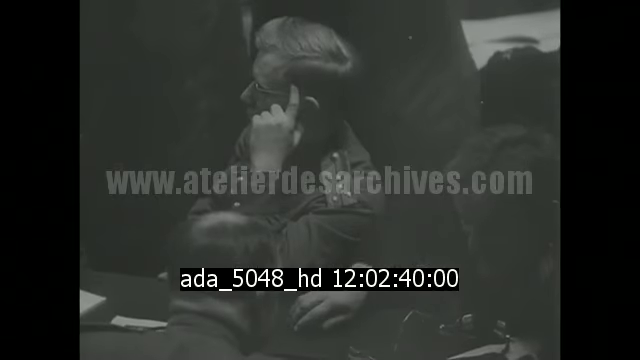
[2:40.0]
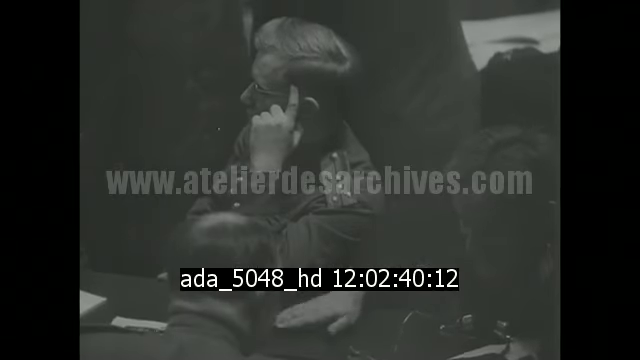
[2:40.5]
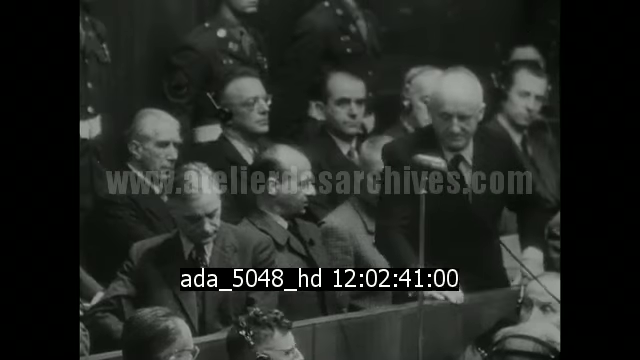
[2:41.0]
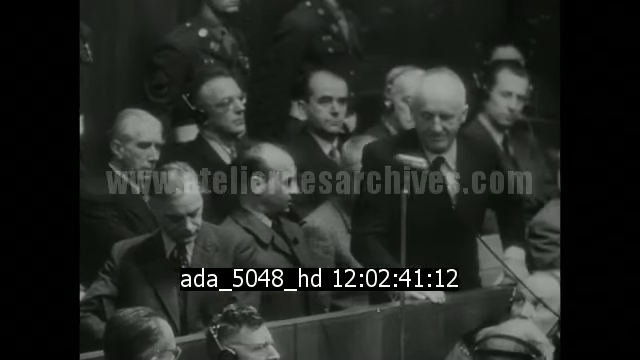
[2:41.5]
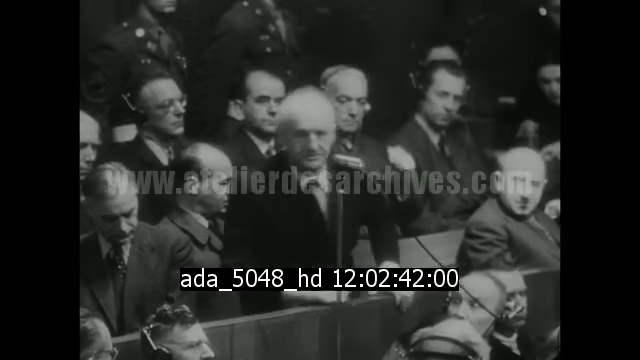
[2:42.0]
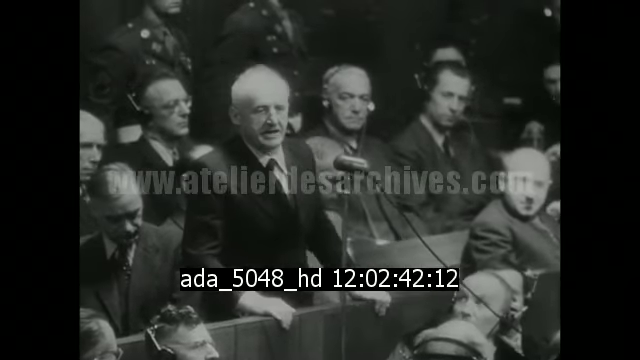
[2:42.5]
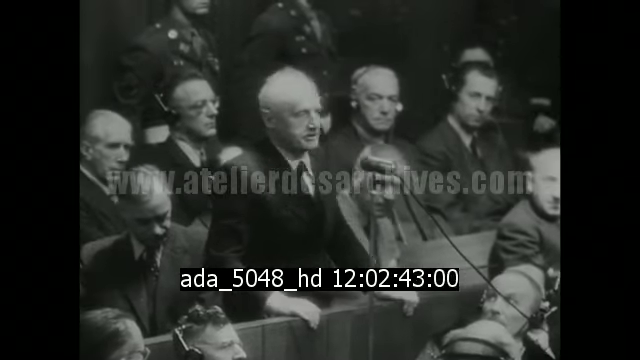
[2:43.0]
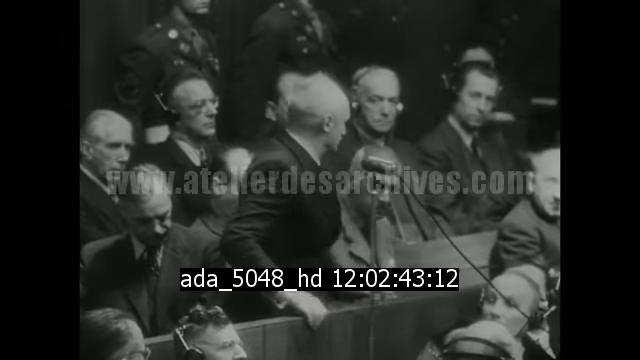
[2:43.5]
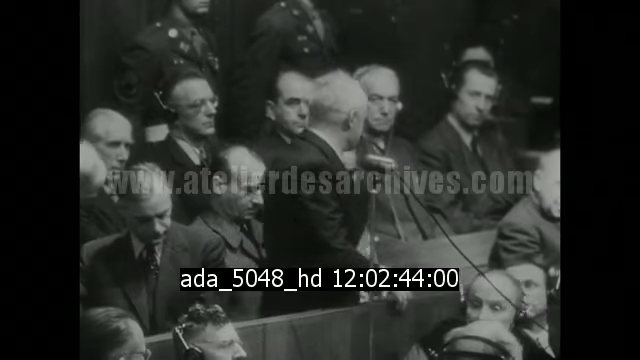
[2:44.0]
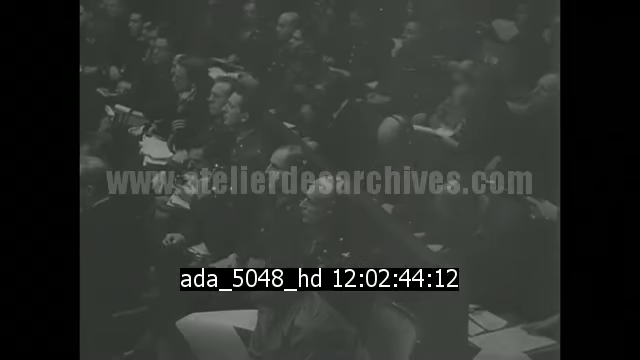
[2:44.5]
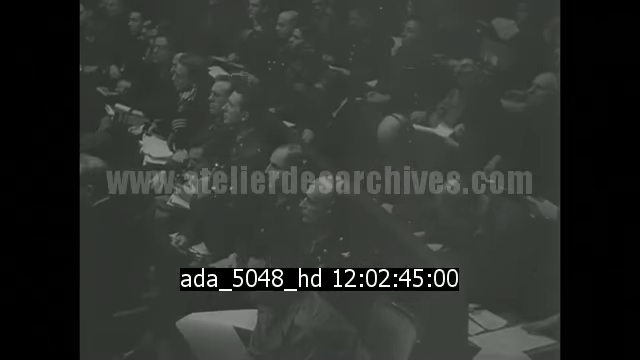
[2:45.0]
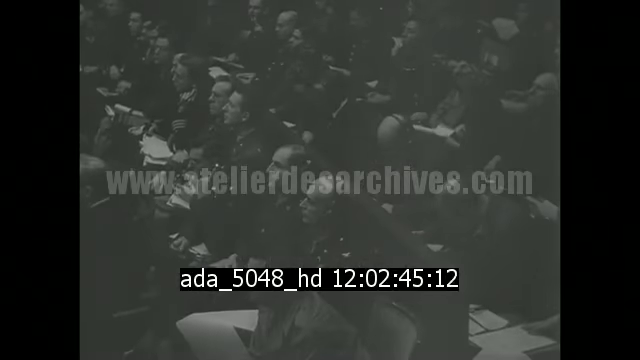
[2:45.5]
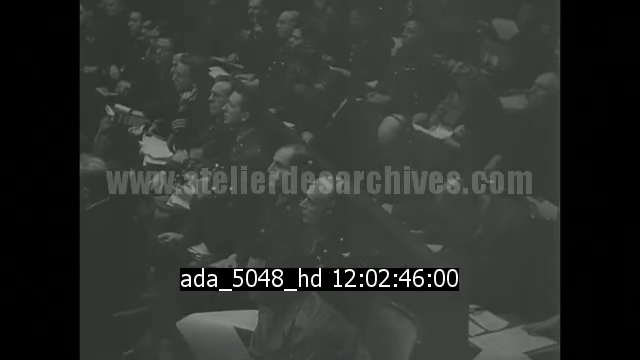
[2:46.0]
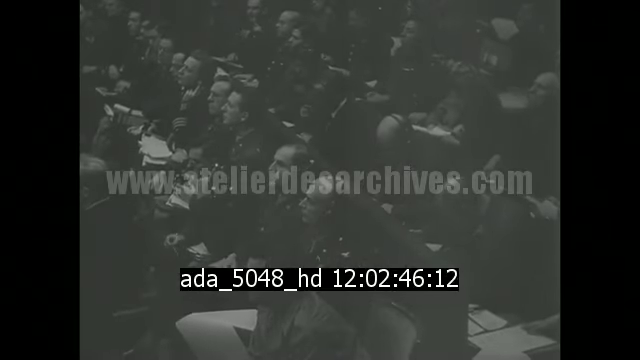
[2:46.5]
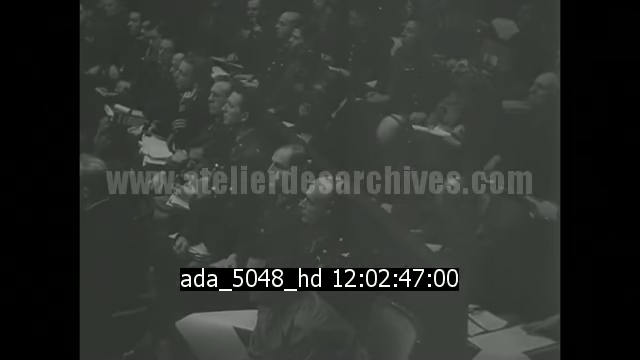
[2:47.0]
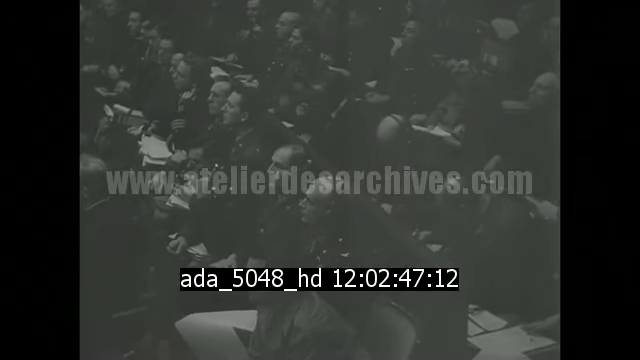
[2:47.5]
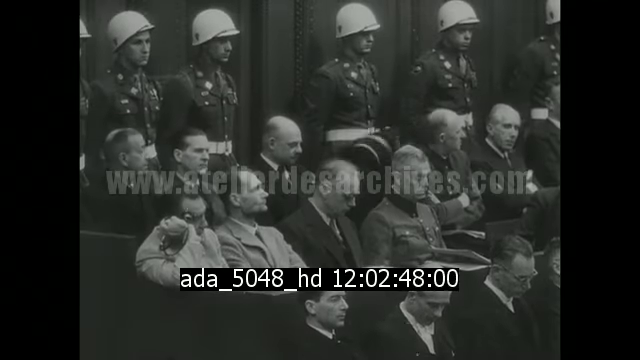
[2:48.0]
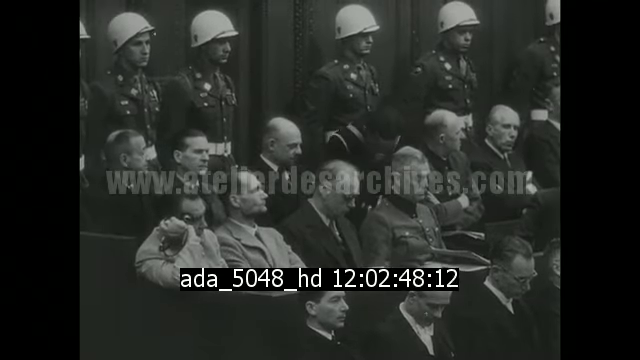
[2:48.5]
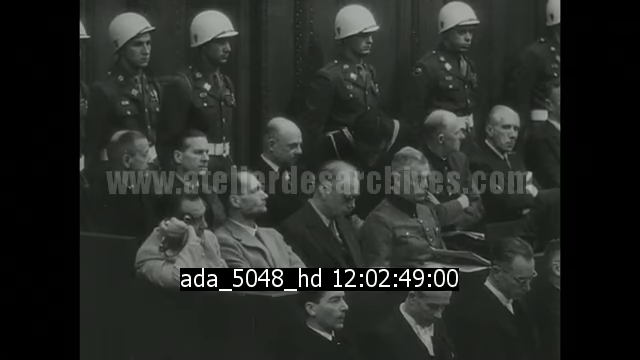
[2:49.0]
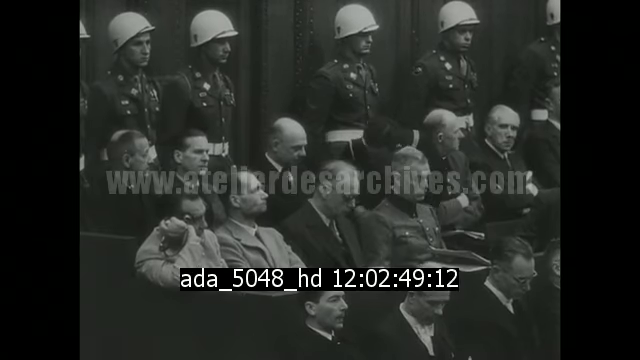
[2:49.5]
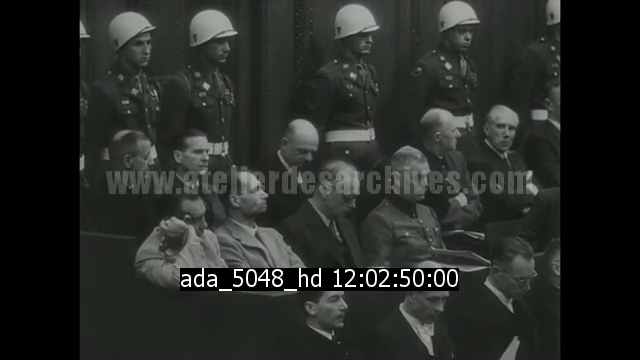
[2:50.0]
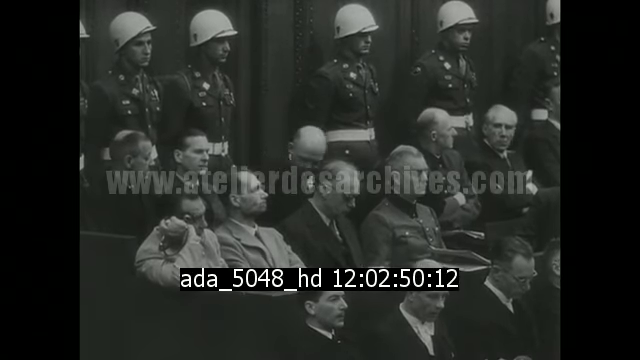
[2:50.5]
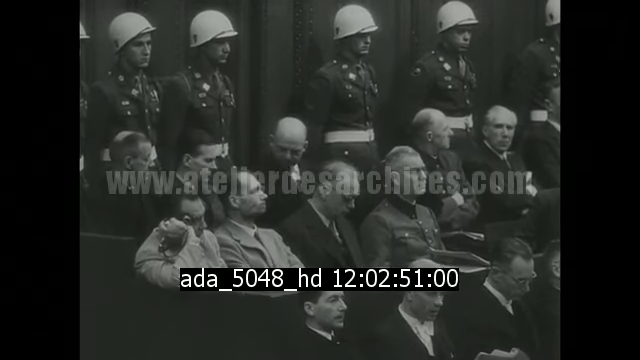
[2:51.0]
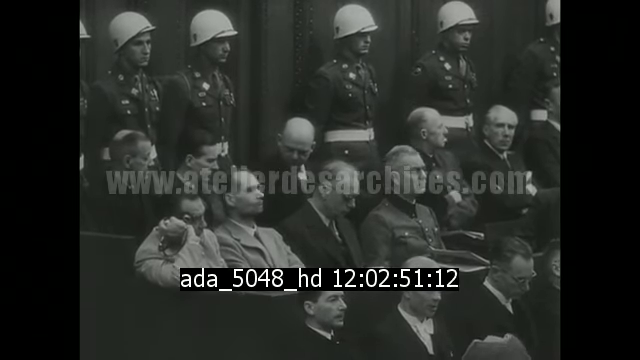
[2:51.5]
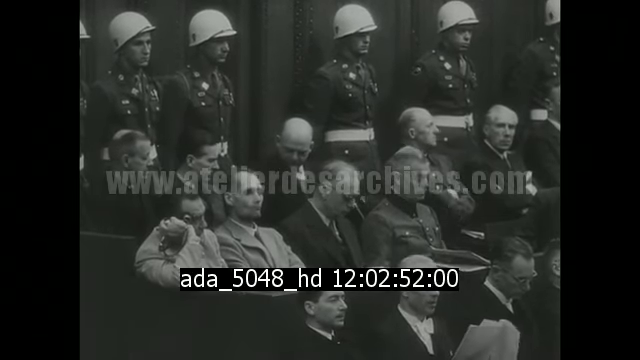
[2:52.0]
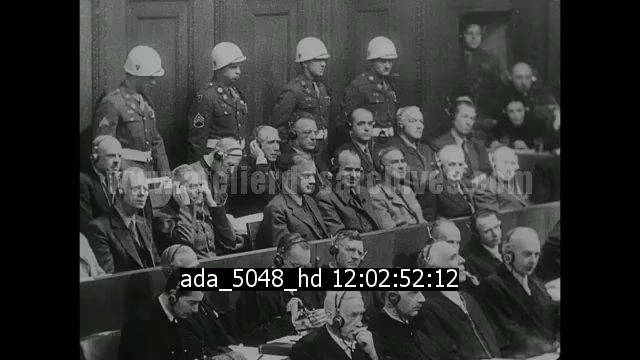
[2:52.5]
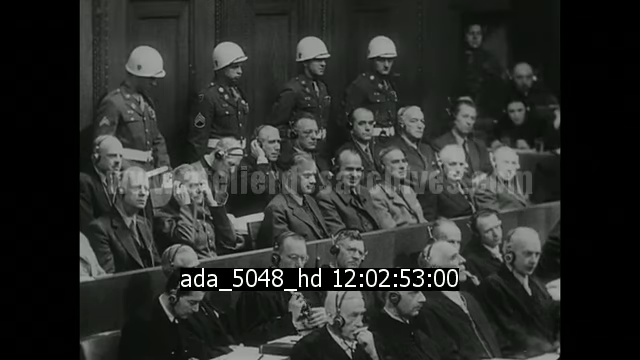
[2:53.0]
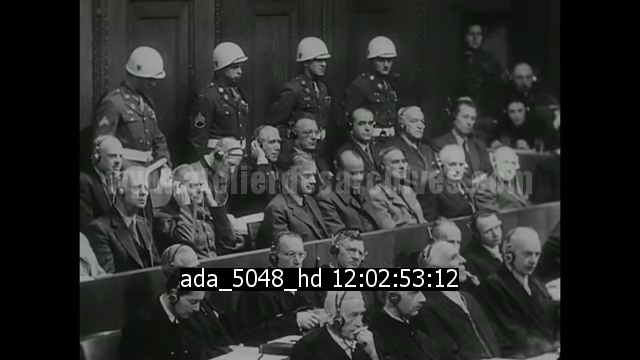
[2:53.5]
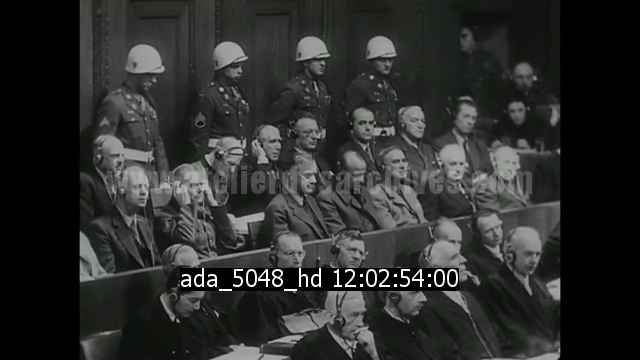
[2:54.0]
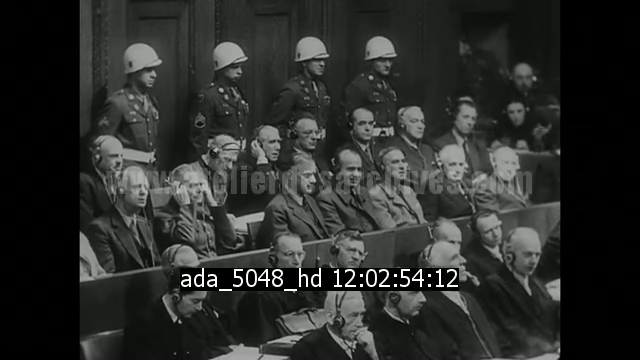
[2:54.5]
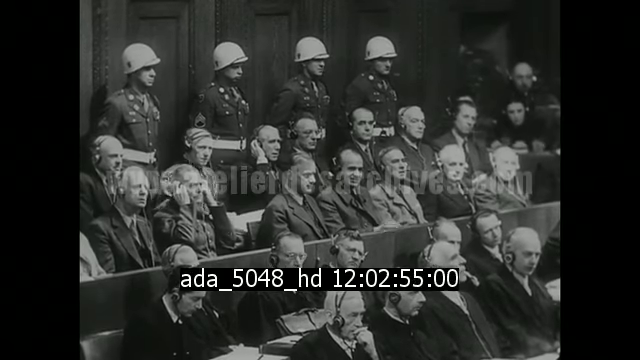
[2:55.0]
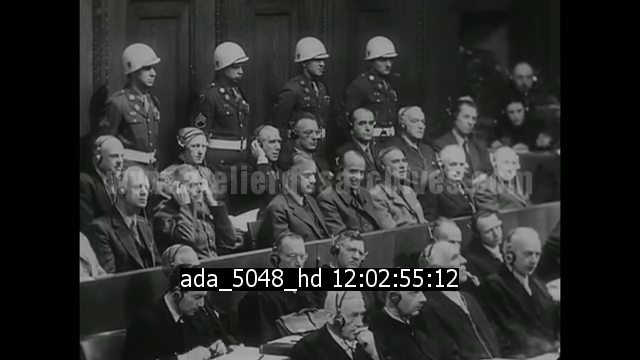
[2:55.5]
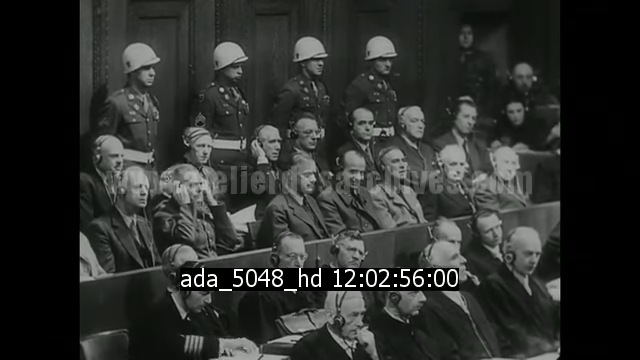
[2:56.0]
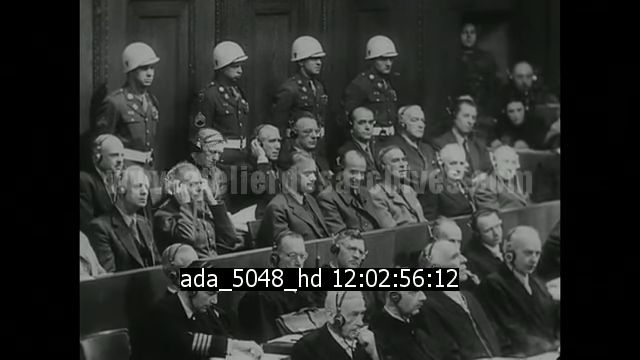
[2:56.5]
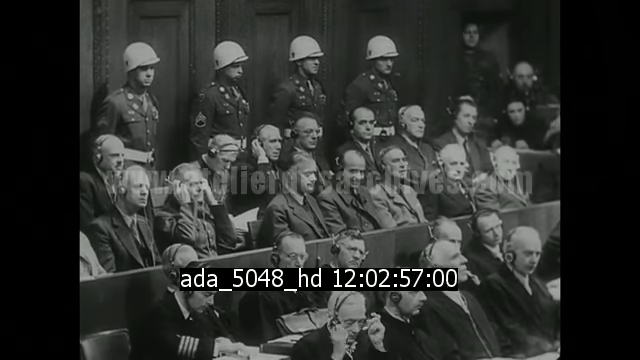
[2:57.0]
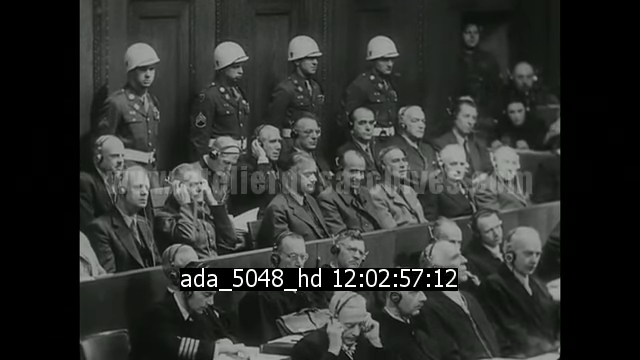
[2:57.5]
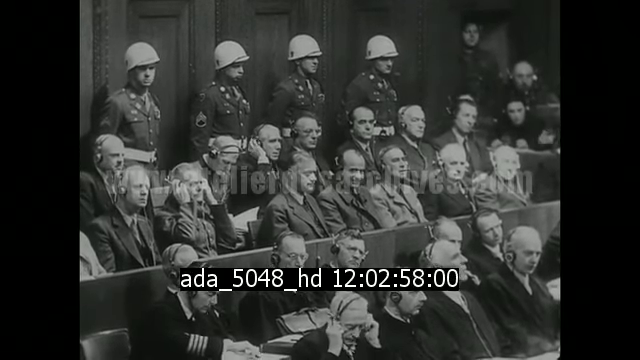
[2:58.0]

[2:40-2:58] A man with a lot of wrinkles testifies at a microphone while everyone else in the background listens to him. Everyone in the scene is smiling, and they all look focused, looking in the same direction.